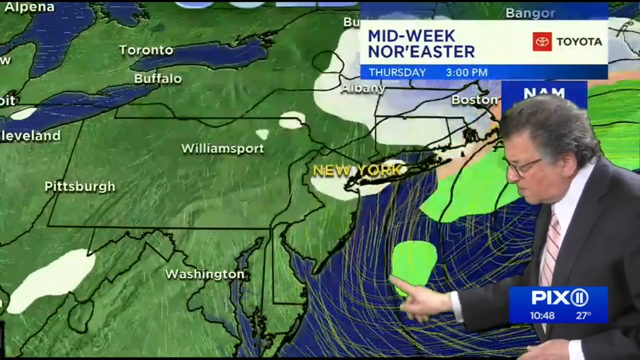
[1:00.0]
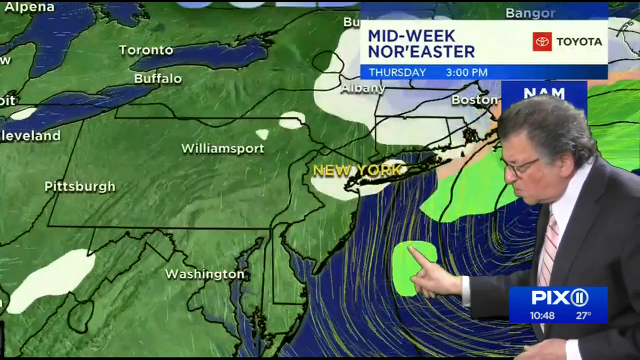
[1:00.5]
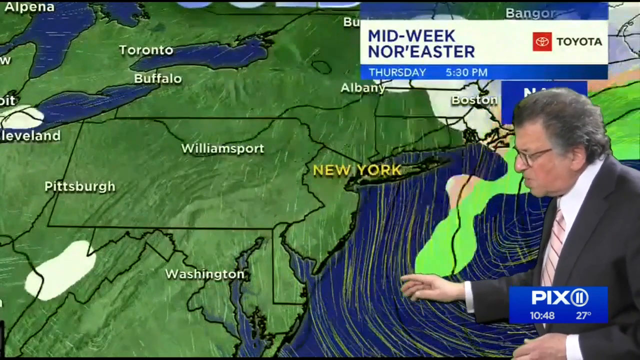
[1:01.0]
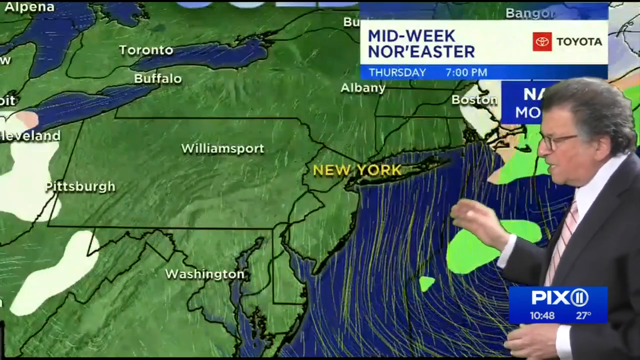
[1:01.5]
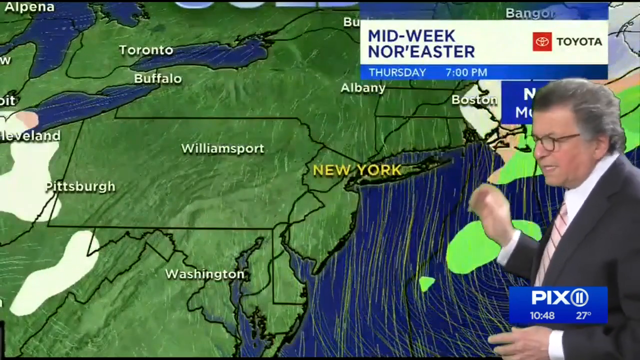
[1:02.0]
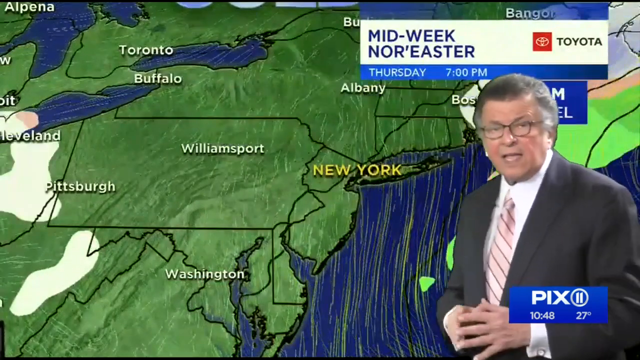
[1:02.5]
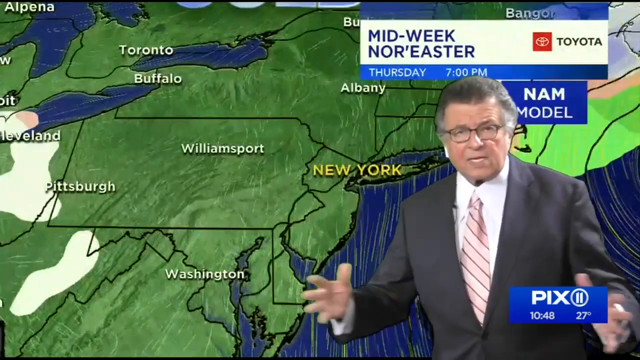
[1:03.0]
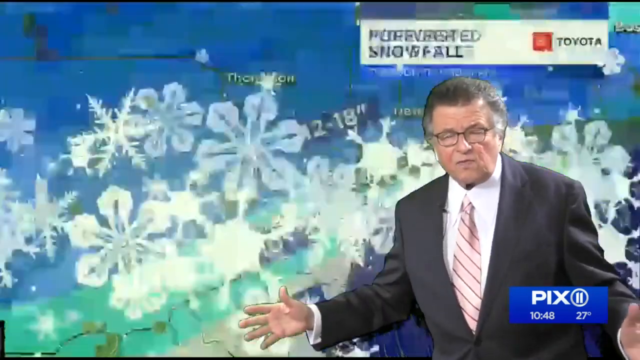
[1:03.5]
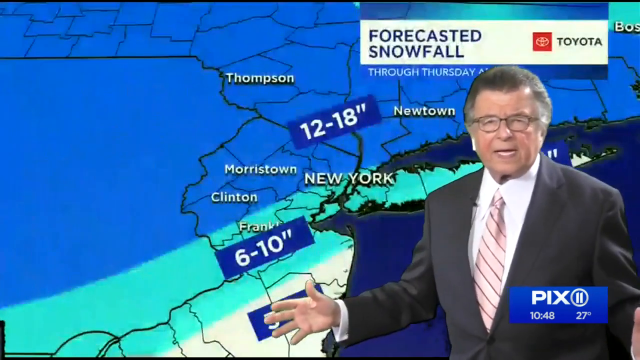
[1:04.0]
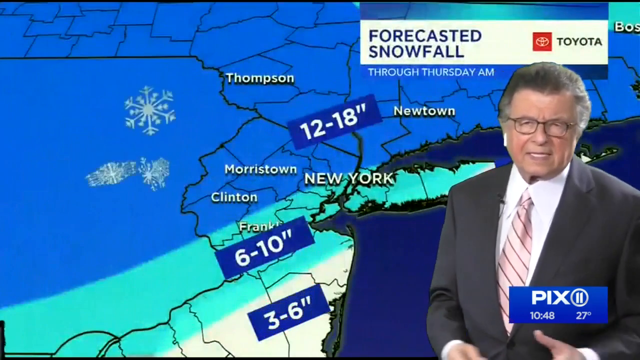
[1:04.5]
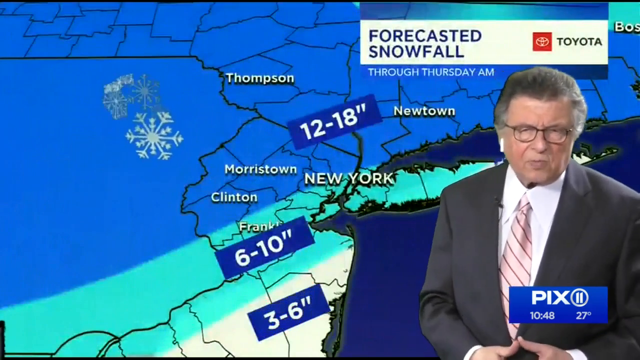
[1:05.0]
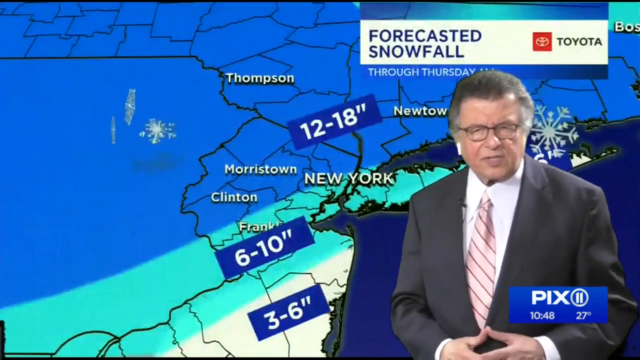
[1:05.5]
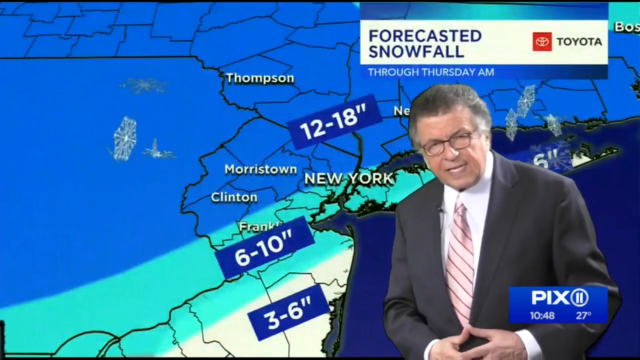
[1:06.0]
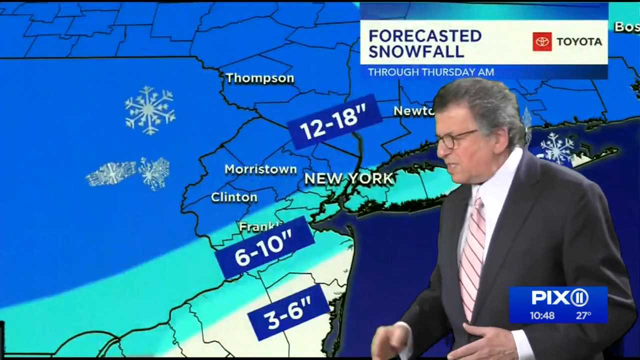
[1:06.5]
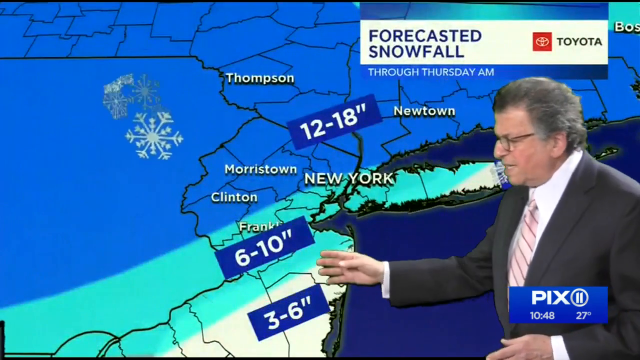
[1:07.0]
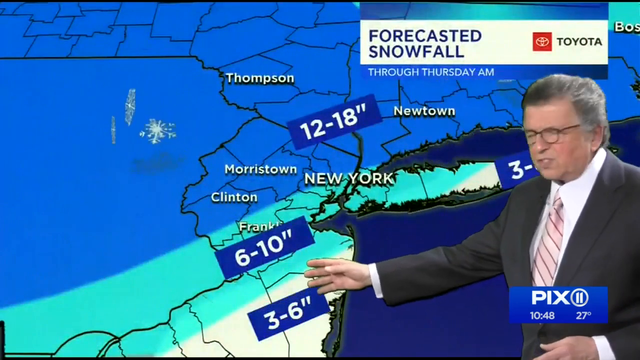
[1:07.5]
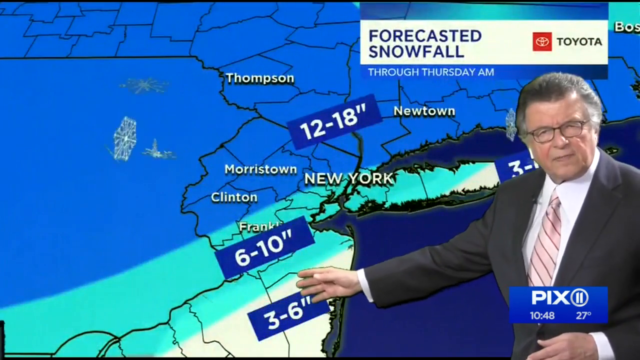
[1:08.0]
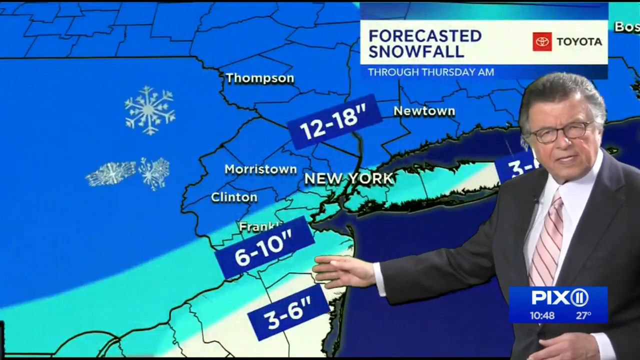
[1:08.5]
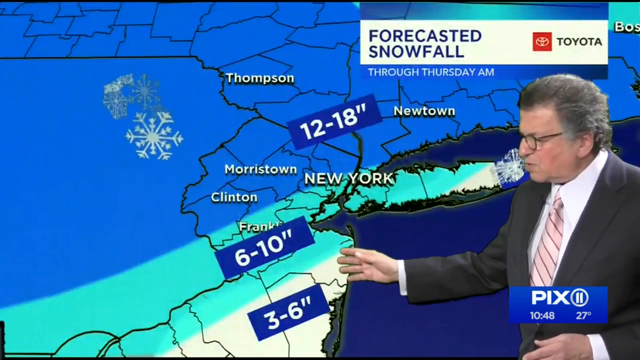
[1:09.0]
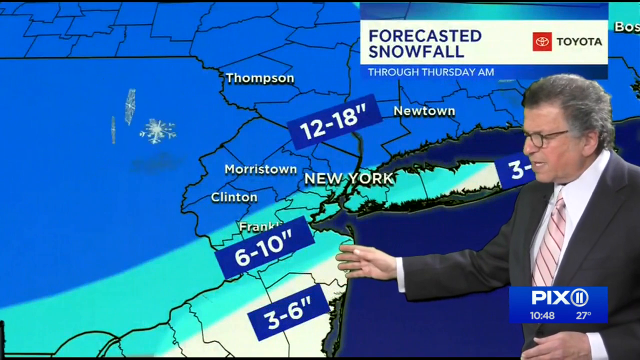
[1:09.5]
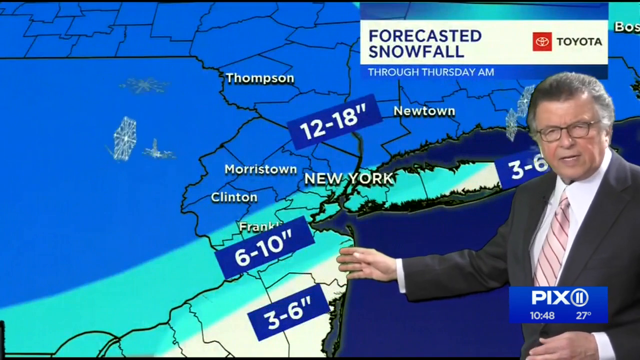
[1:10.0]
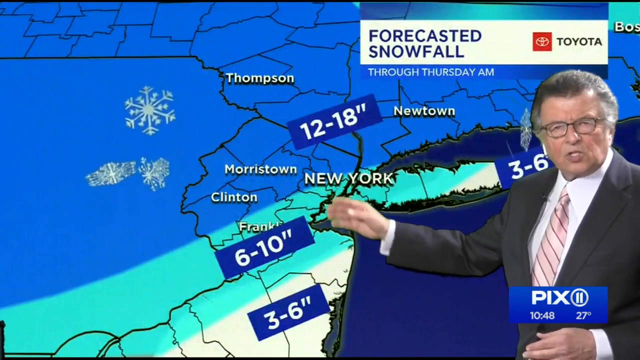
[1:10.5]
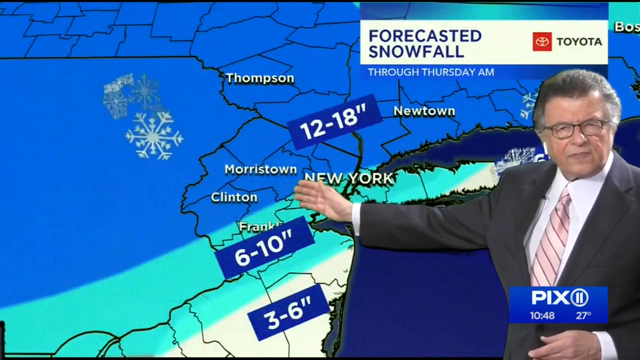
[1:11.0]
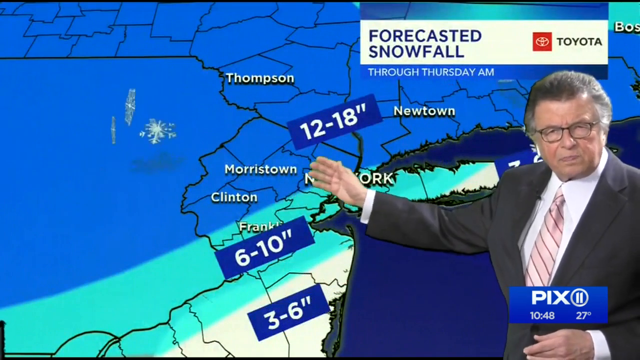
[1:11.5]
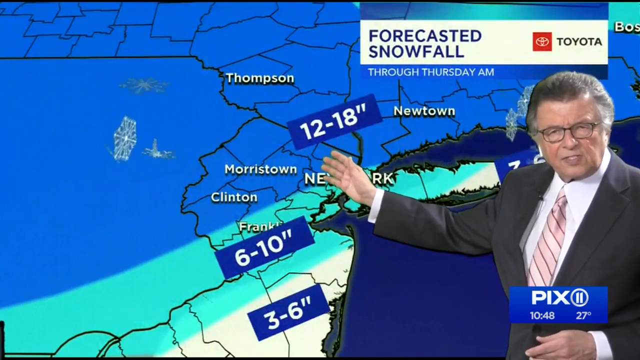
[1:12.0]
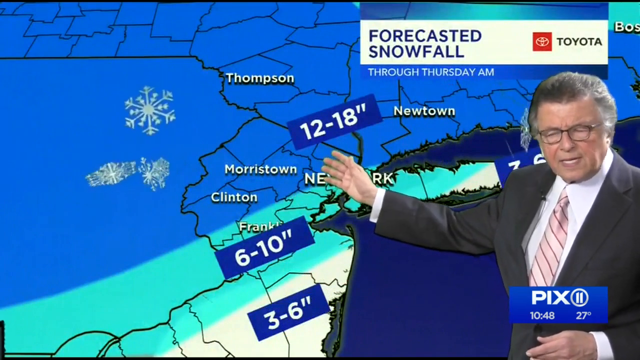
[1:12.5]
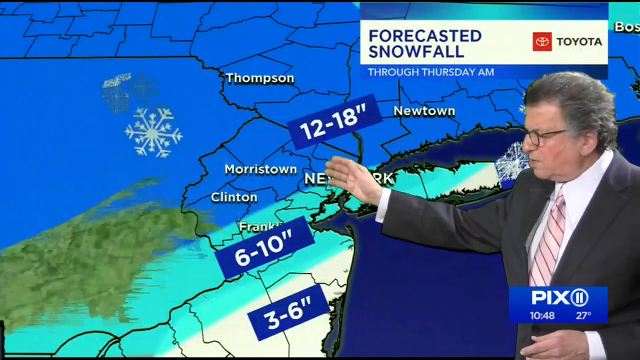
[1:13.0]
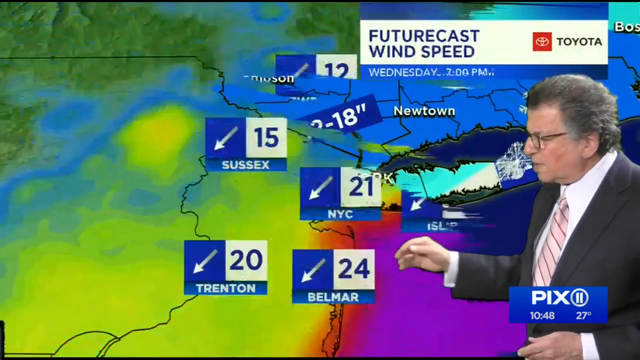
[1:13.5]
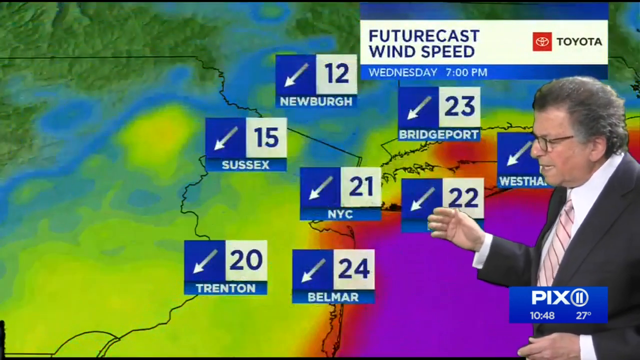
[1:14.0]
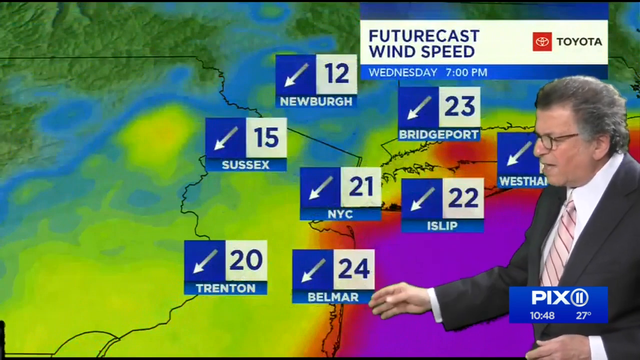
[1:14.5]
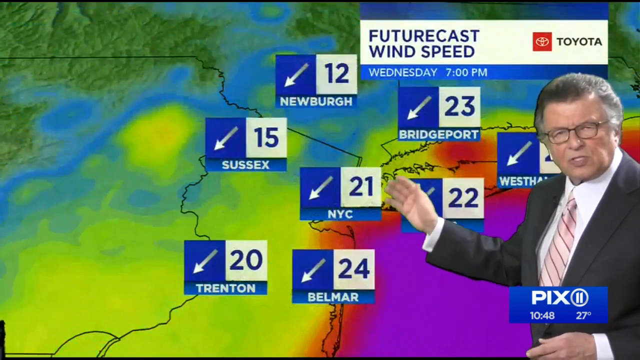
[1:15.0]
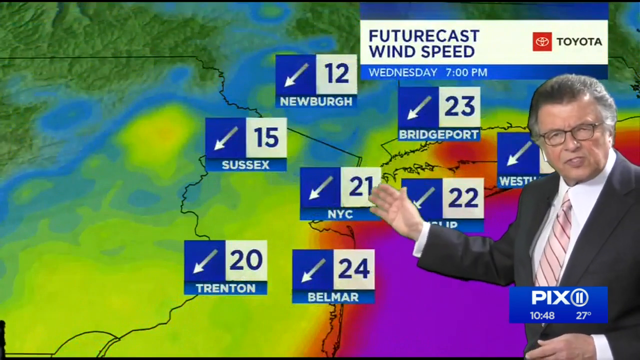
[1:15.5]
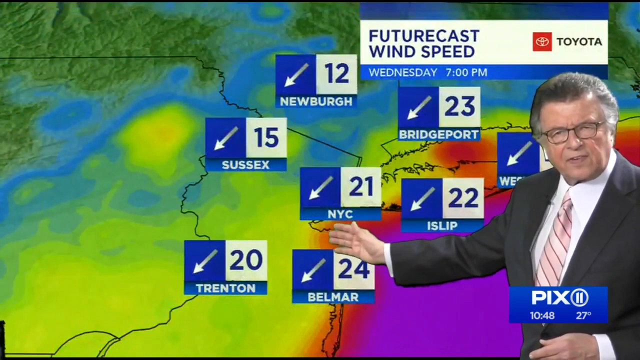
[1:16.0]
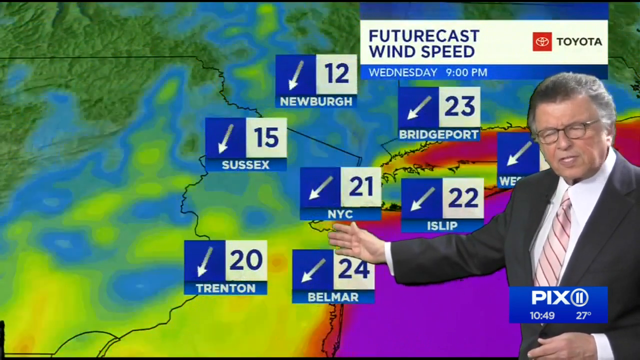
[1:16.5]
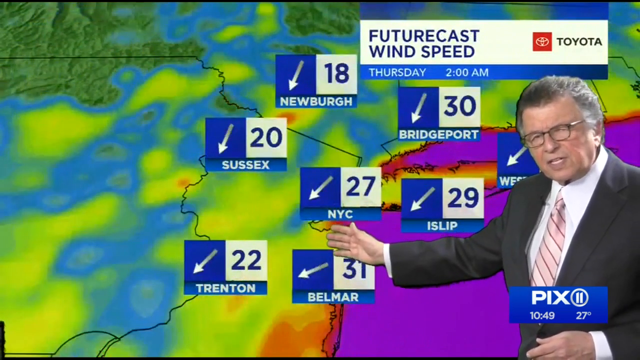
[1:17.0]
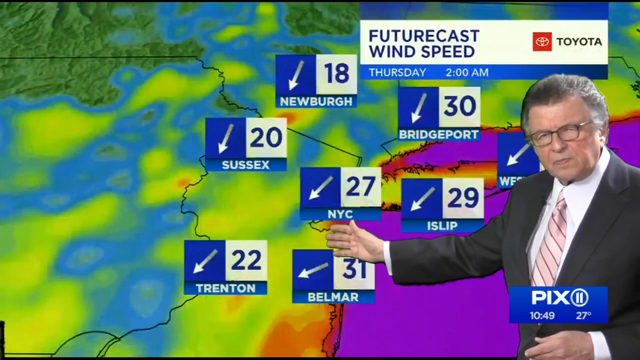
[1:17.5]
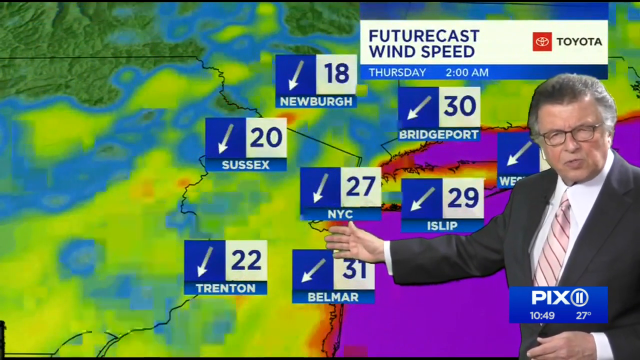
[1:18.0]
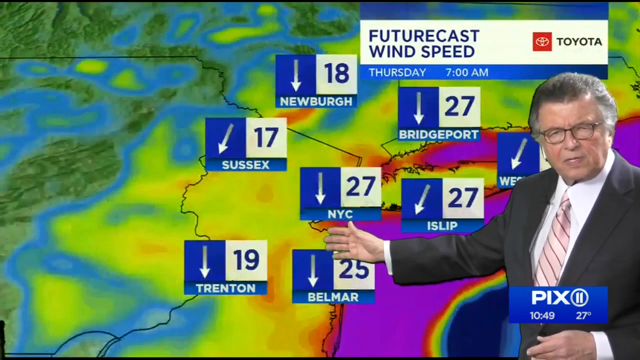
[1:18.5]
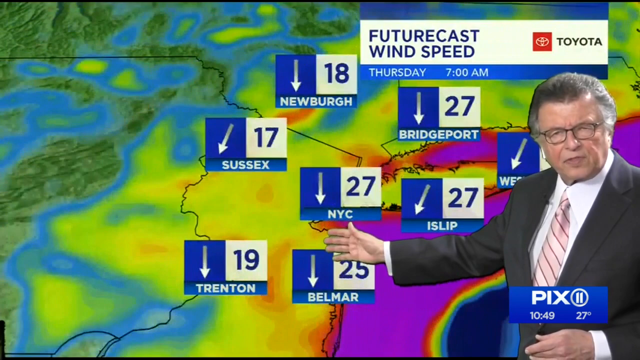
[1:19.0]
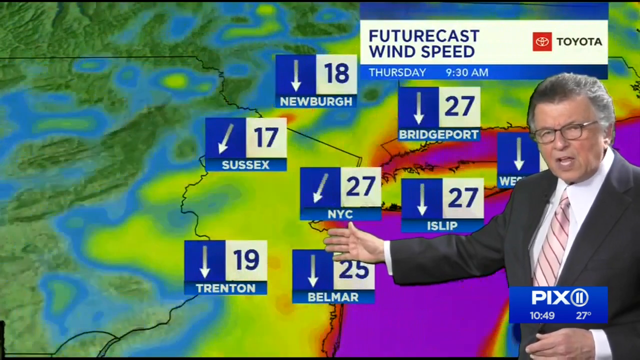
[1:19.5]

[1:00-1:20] The man circles the lower green circle, with most of New York covered in green. A snowfall forecast shows 6-10 inches in Frankfort, 12-18 inches in upper New York, Newton, Thompson and Morristown, and 3-6 inches above that. Wind speeds are then shown, with how the winds will move and at what speed as the hours go on. A virtual snowfall graphic appears on the screen. The wind map covers Sussex, New York City, Belmar, Trenton and Islip, apparently with normal wind speeds but rapidly changing directions, and yellow lines move around. The map is detailed, showing many different counties. He keeps moving his hands toward the blue areas and looking at the camera, gesturing expressively and seeming very passionate. He has grayish hair that seems to have once been brown, some more hair in the back, and square glasses.